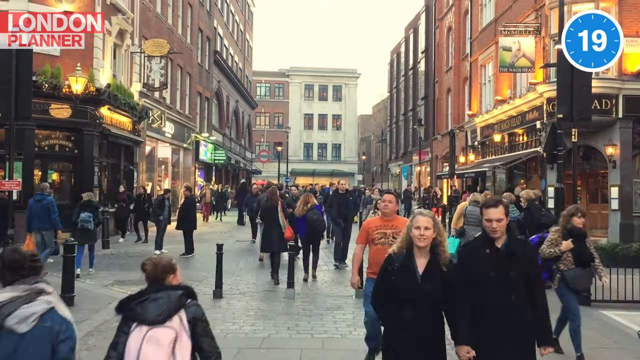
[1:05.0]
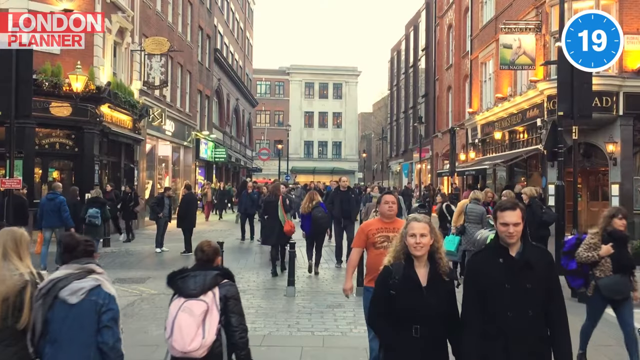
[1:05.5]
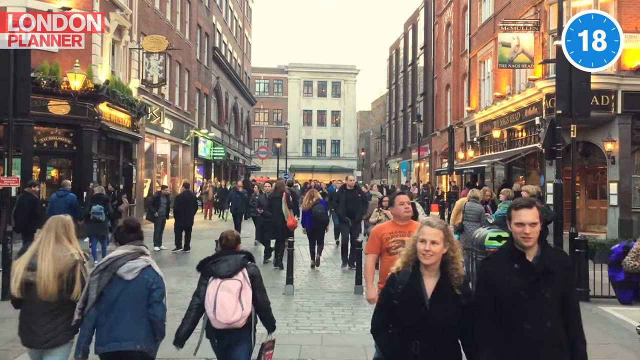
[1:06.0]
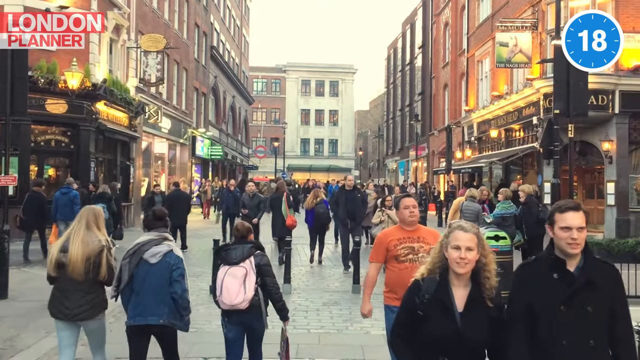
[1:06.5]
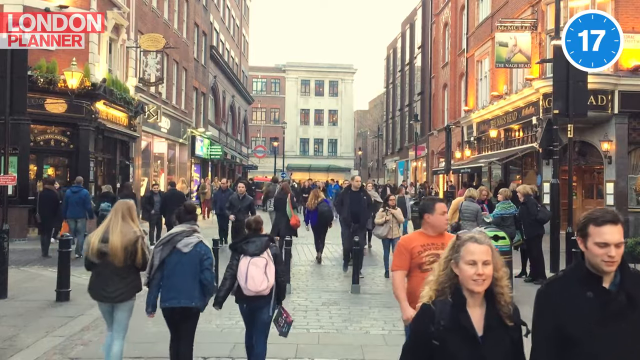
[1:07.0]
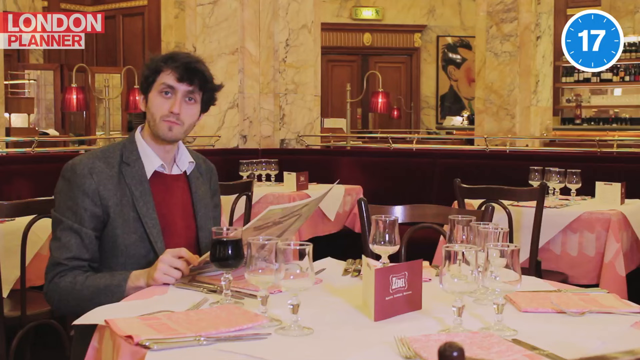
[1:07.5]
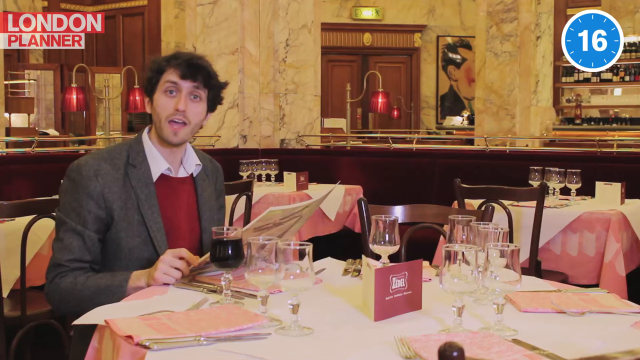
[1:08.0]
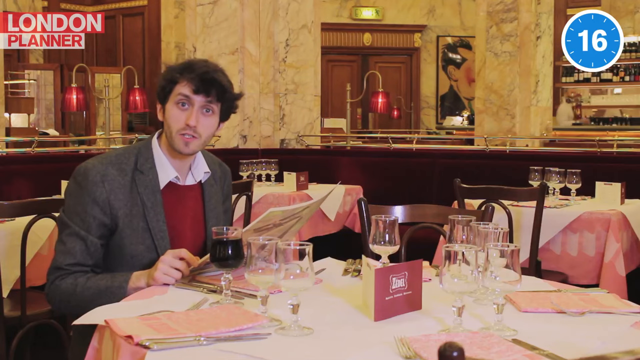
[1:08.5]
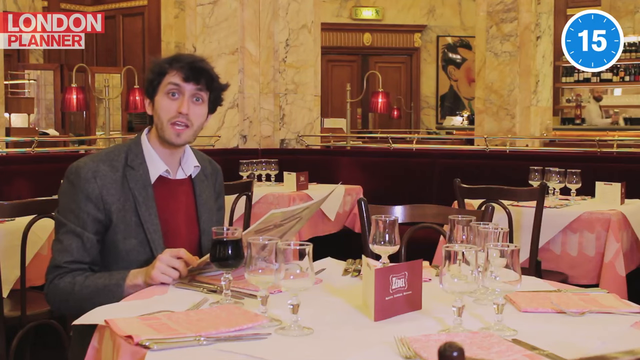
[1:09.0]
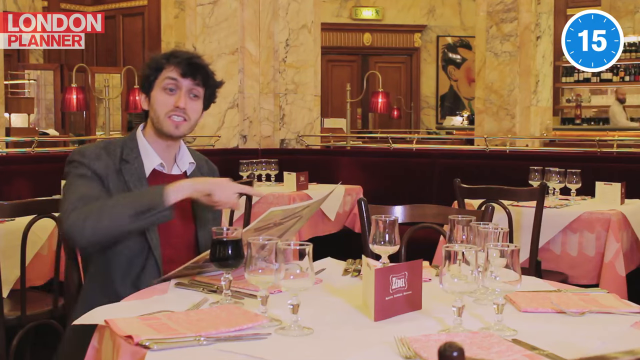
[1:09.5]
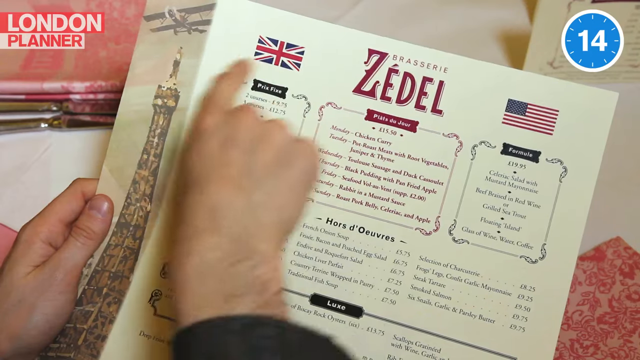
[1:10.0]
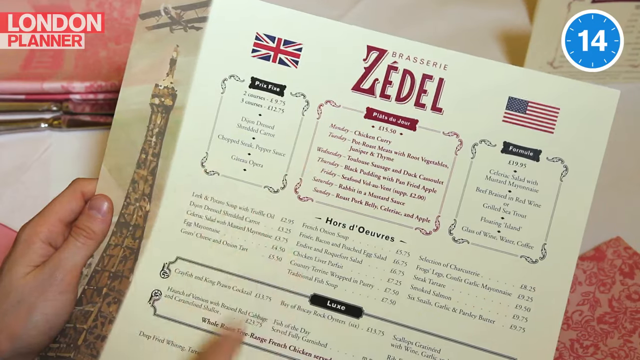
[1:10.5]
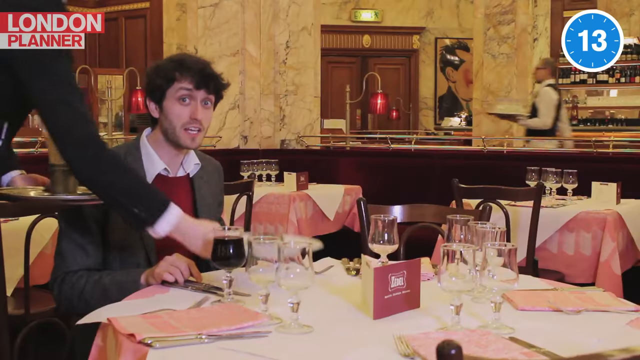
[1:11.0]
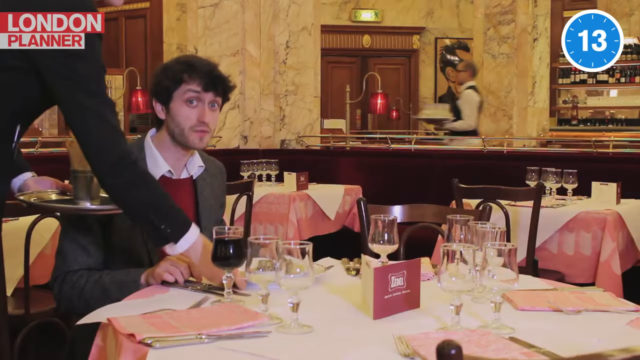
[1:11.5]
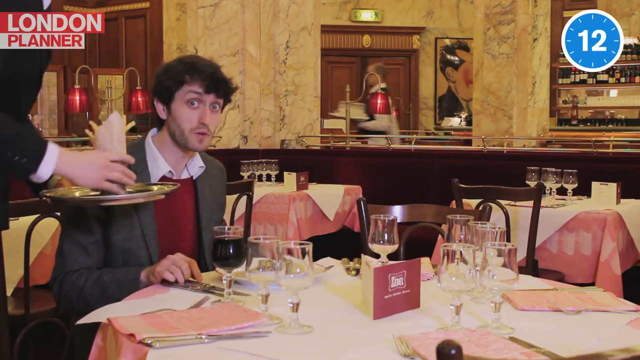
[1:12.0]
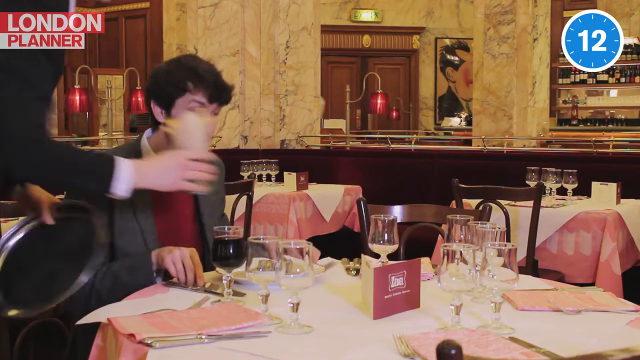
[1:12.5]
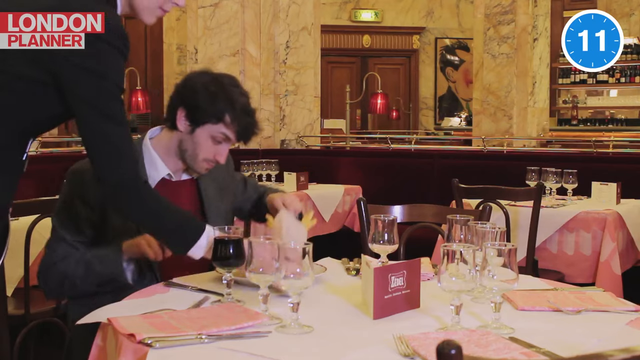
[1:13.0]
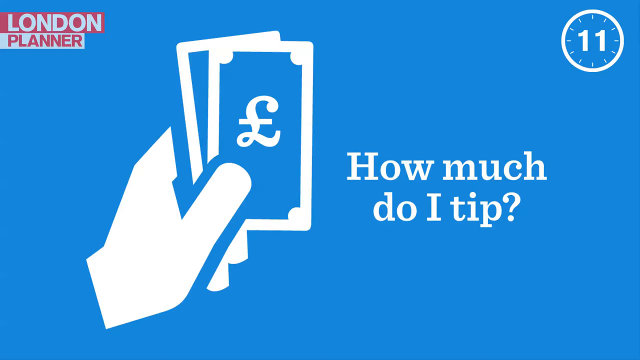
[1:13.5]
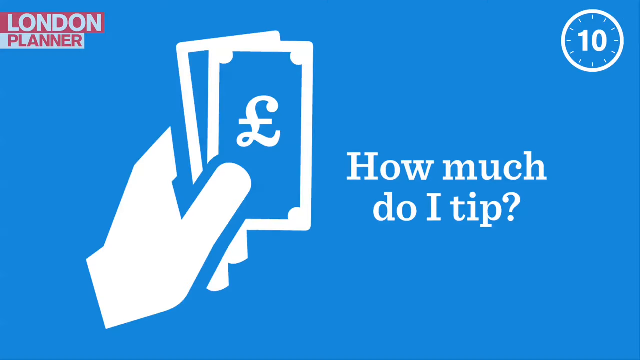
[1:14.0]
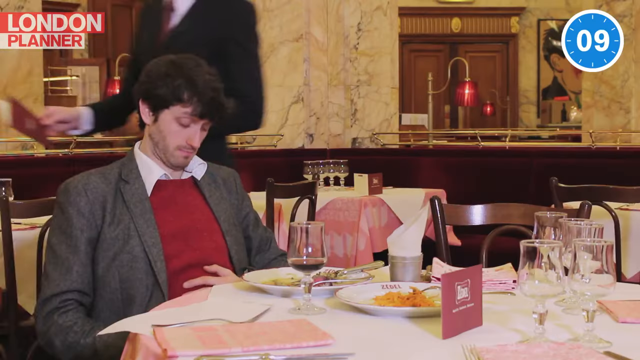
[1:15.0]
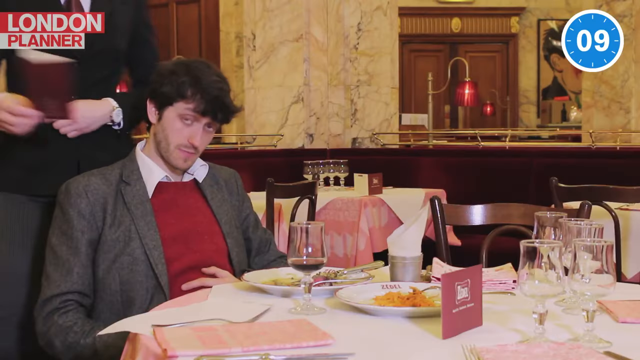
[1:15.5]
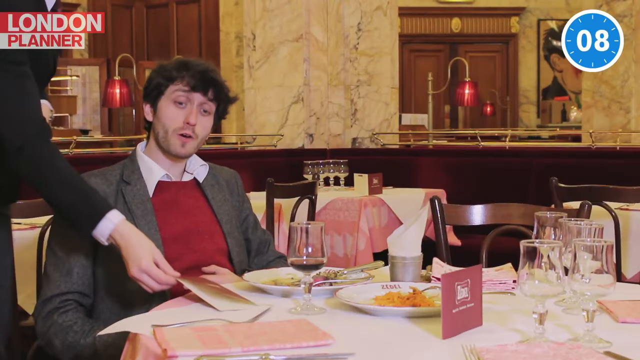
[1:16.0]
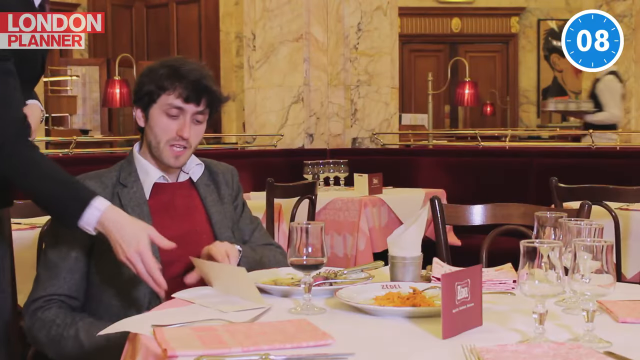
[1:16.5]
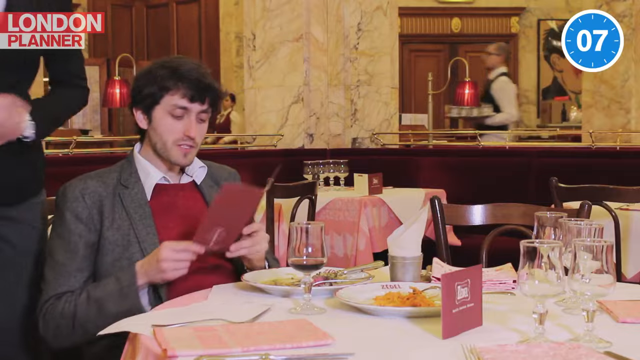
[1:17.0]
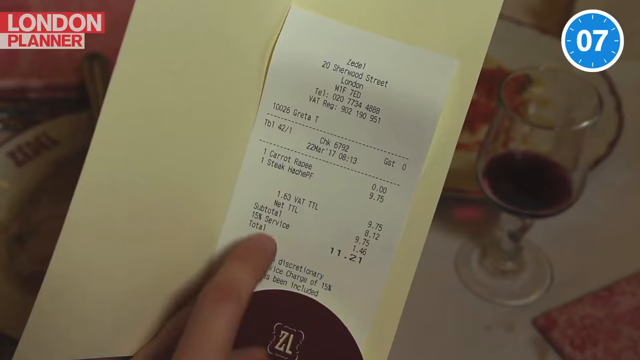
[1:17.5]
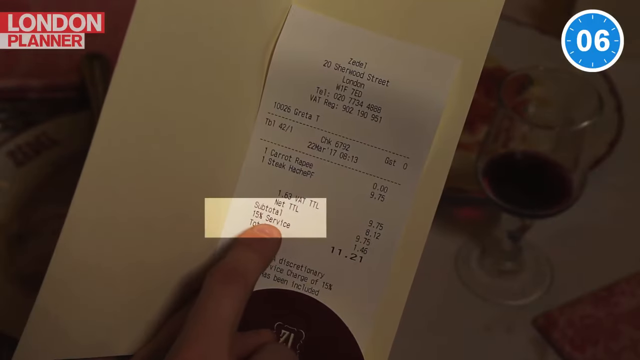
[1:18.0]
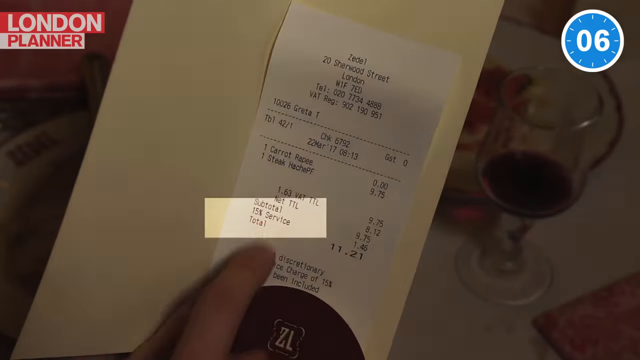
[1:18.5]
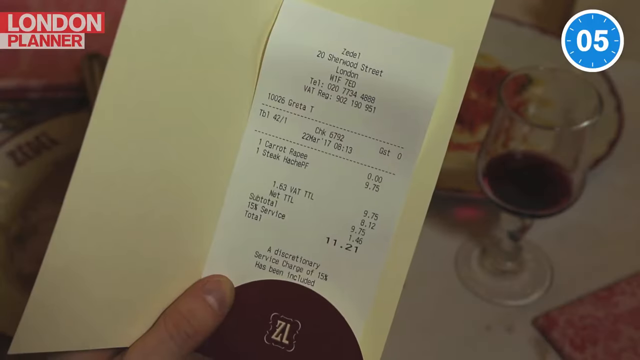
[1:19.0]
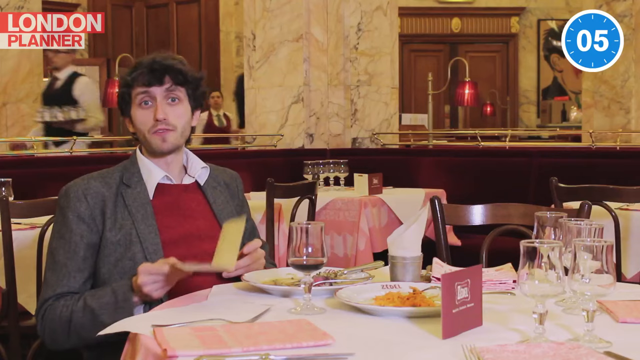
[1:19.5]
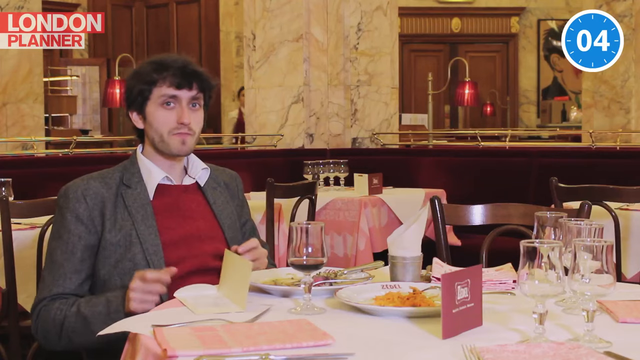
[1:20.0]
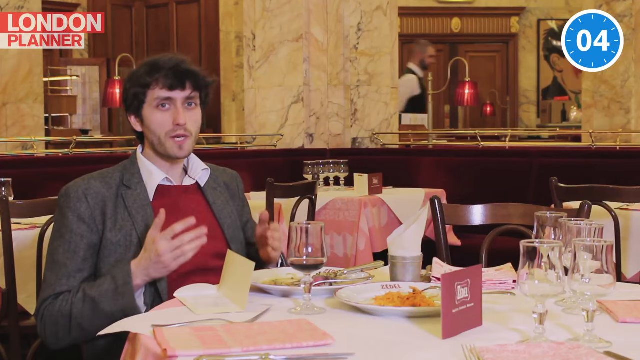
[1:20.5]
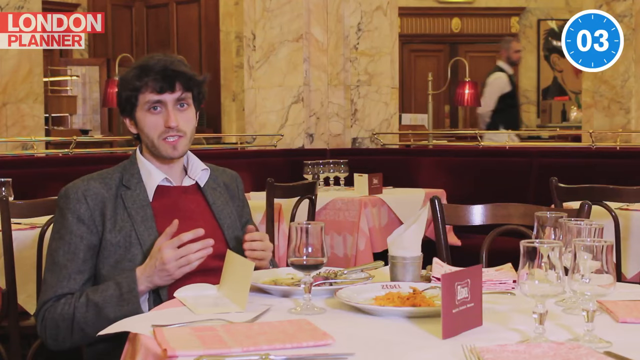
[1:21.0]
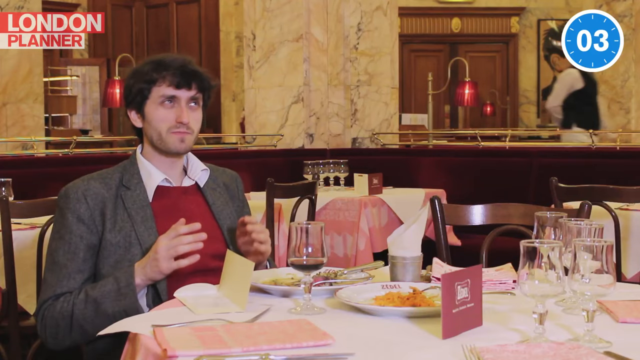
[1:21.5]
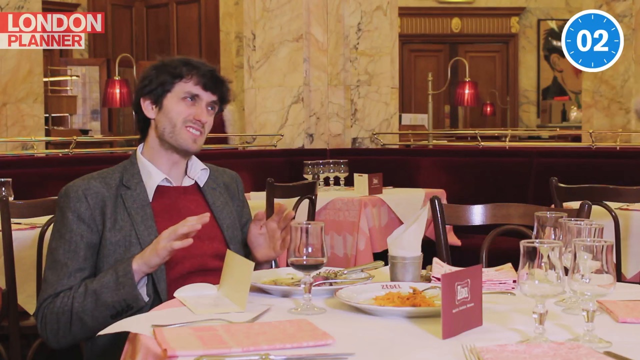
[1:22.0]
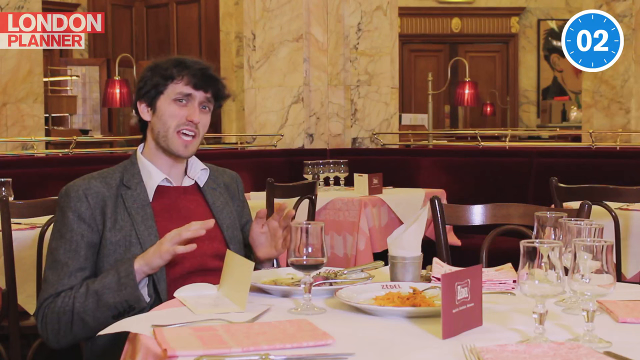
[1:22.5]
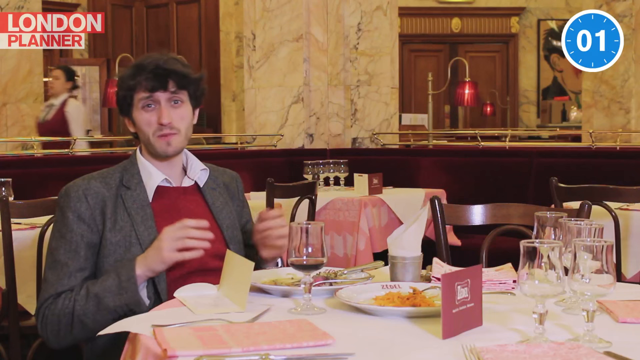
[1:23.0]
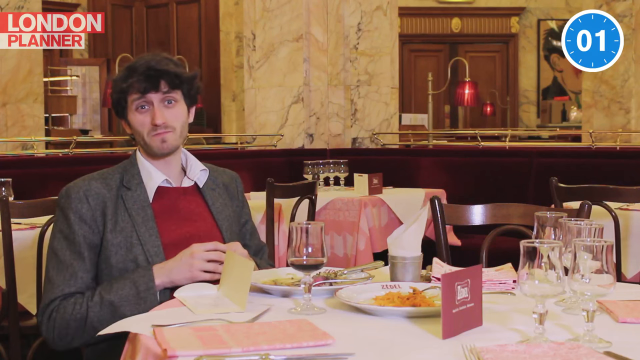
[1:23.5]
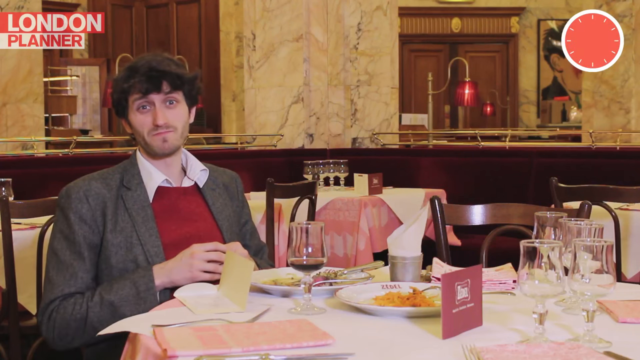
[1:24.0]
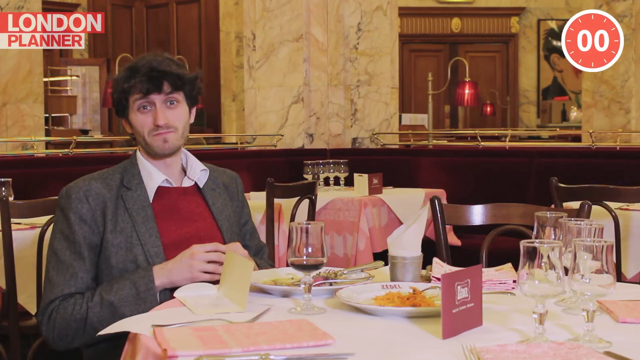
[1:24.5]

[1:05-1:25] The video shifts to very busy London streets; it looks not too bright, perhaps around midday. The man is then in another restaurant while a clock counts down from 19 seconds to zero. The restaurant has London and Britain flags on the menu. He shows the bill and points to a tax service. At a place called Zedell, a person brings him the bill in a folio, and he looks at the camera making gestures. Text reads "how much do I tip", and apparently the tip is included on the receipt.